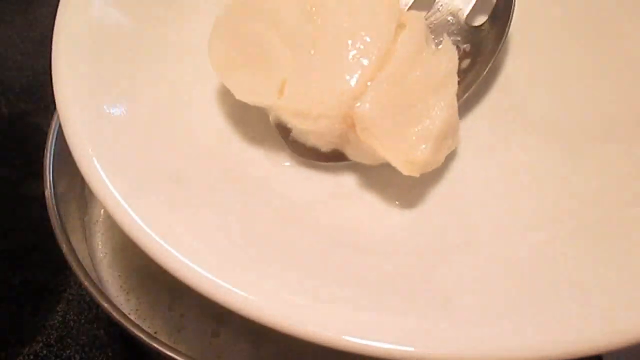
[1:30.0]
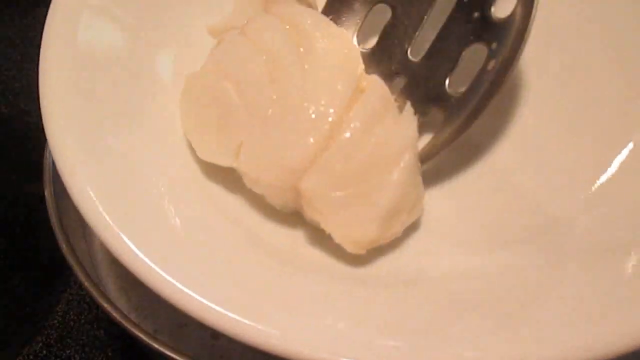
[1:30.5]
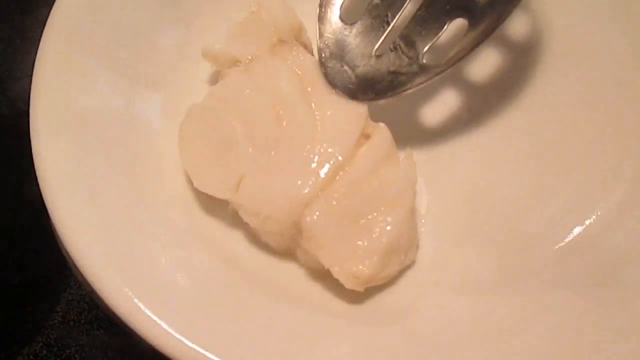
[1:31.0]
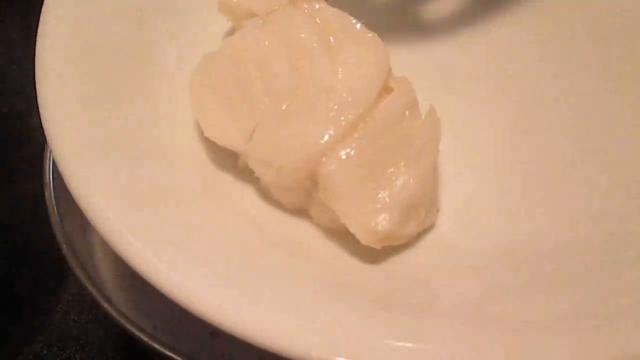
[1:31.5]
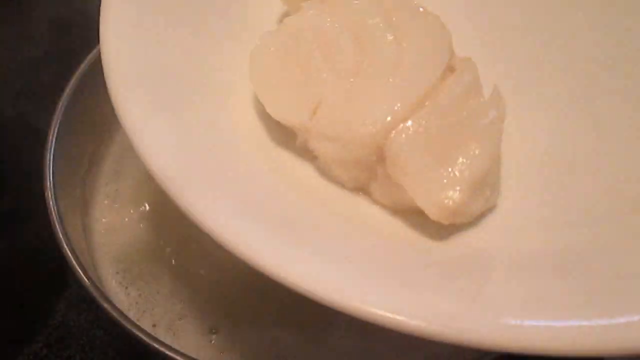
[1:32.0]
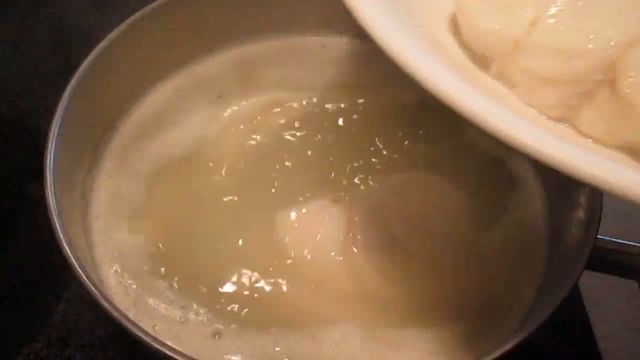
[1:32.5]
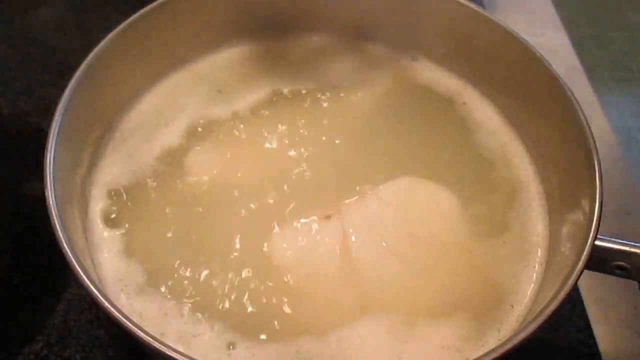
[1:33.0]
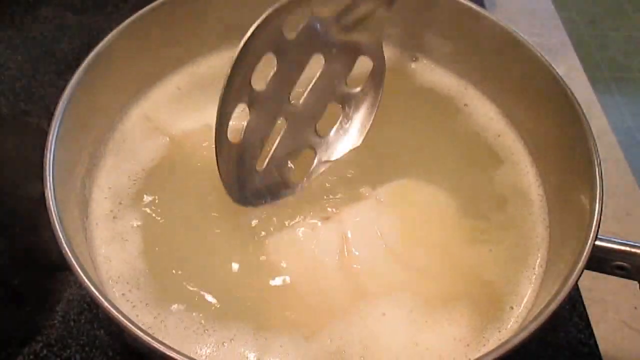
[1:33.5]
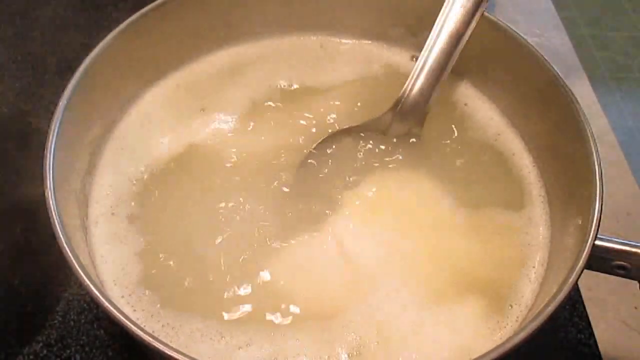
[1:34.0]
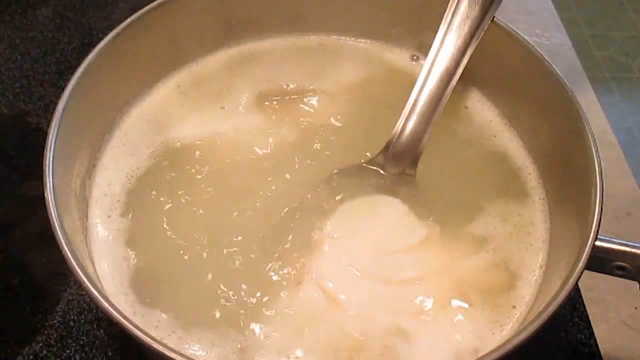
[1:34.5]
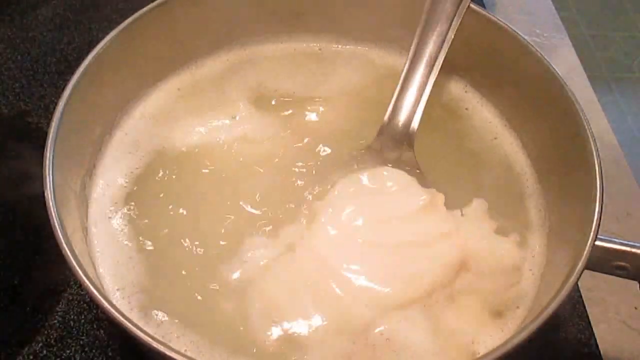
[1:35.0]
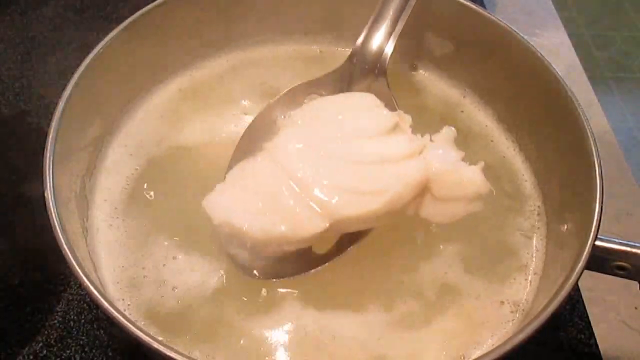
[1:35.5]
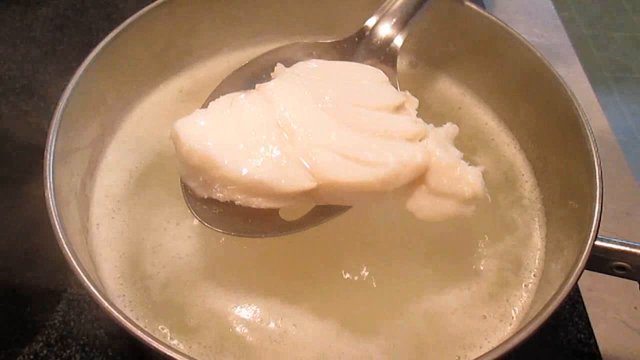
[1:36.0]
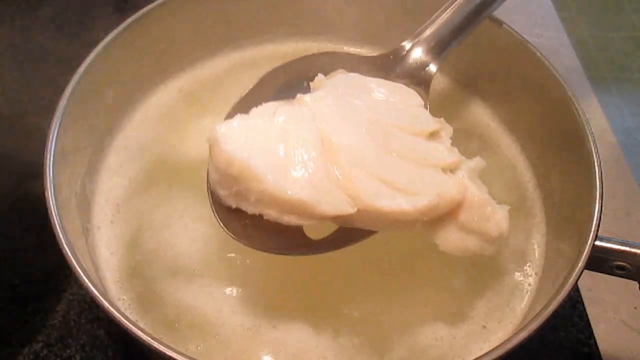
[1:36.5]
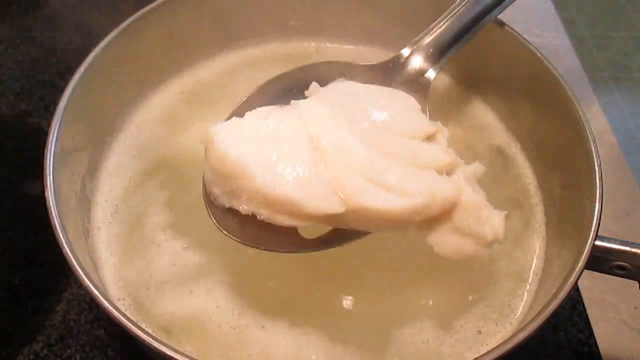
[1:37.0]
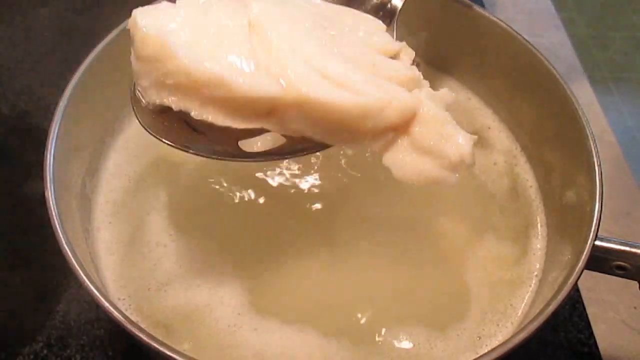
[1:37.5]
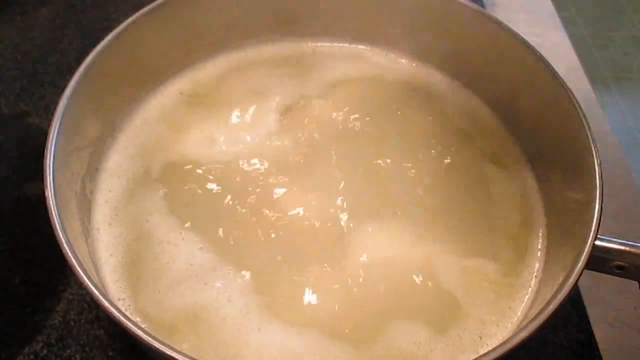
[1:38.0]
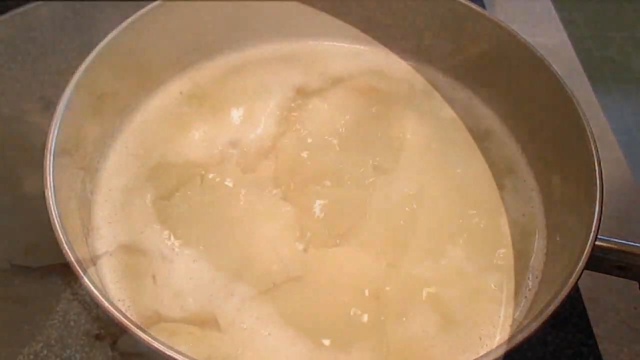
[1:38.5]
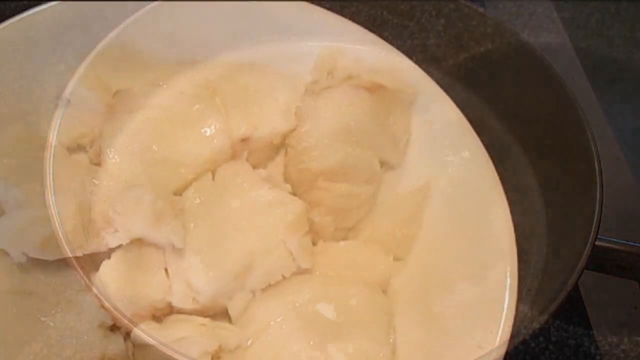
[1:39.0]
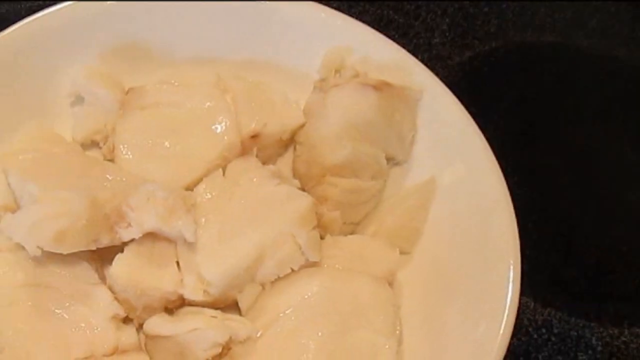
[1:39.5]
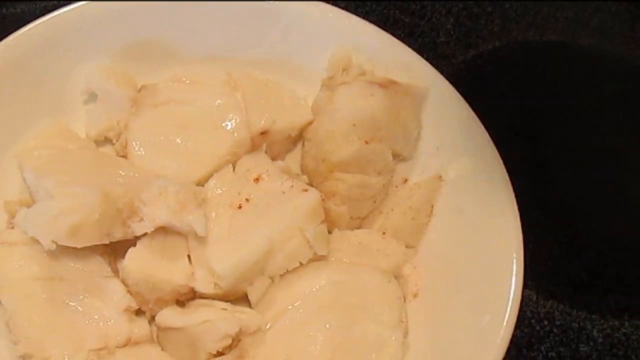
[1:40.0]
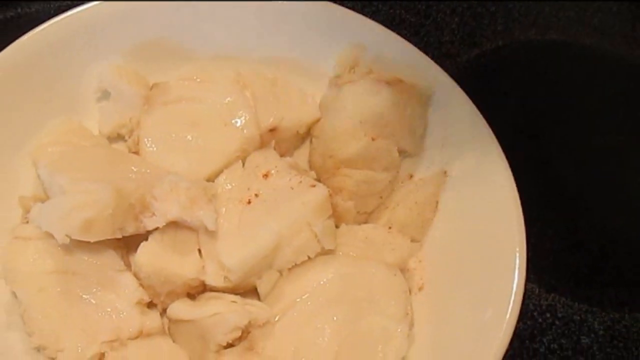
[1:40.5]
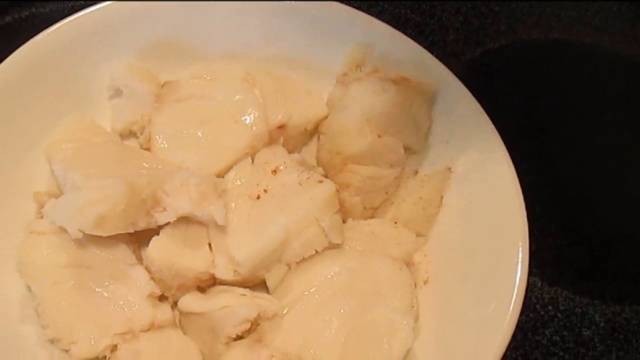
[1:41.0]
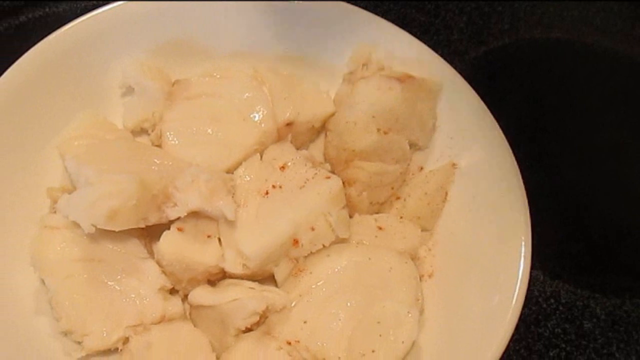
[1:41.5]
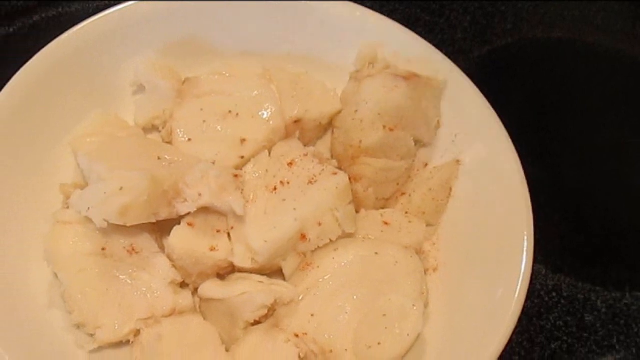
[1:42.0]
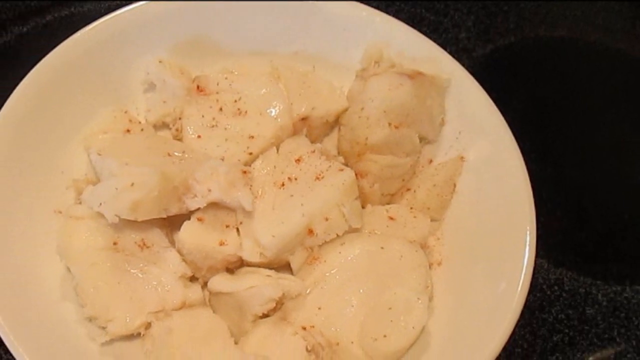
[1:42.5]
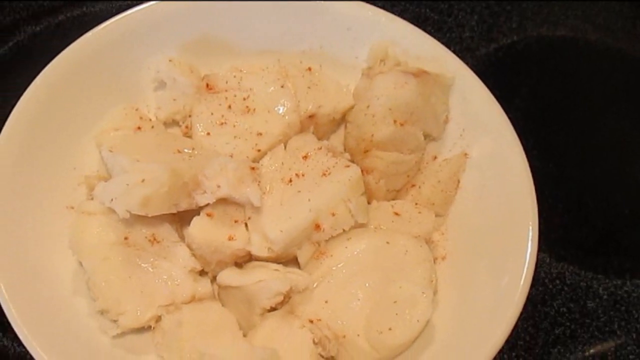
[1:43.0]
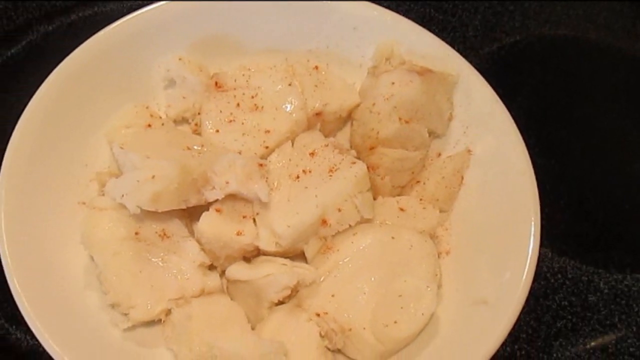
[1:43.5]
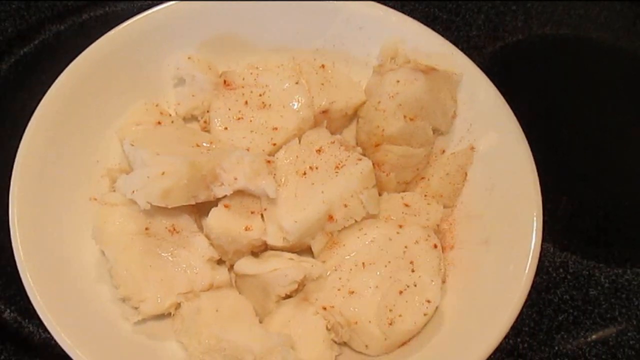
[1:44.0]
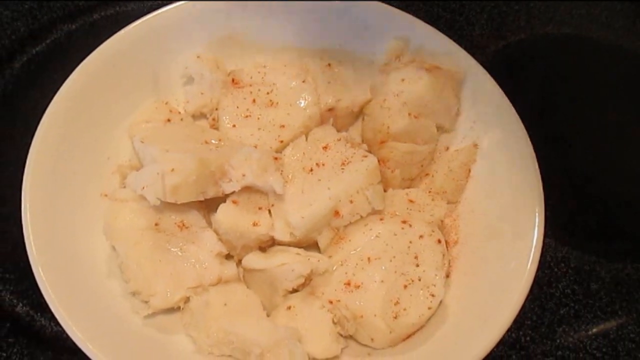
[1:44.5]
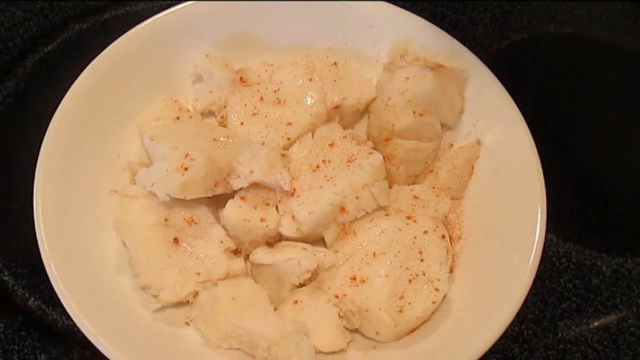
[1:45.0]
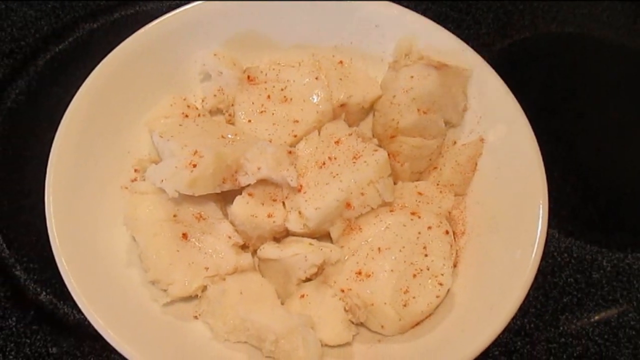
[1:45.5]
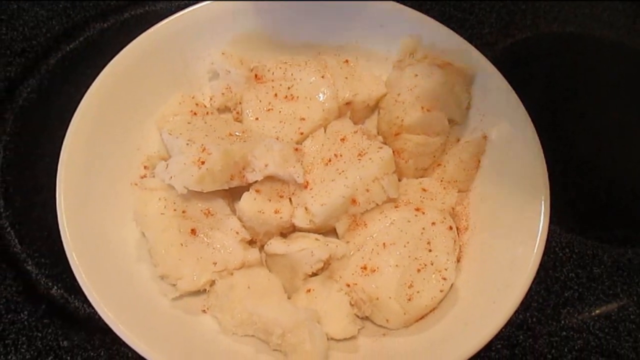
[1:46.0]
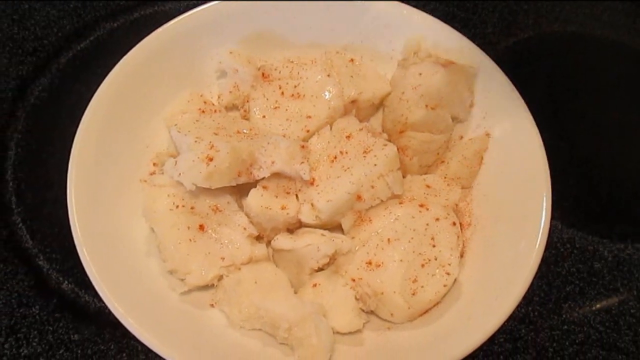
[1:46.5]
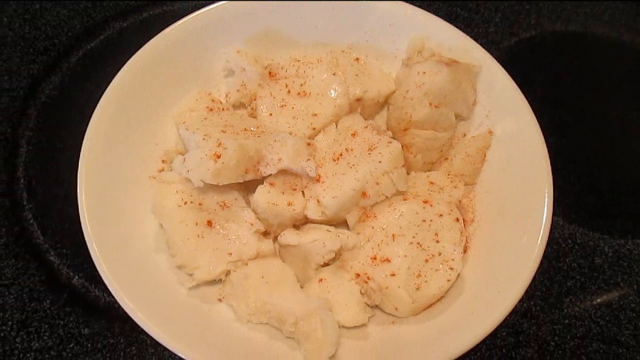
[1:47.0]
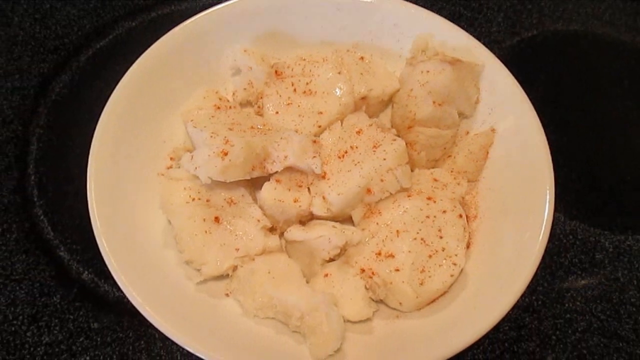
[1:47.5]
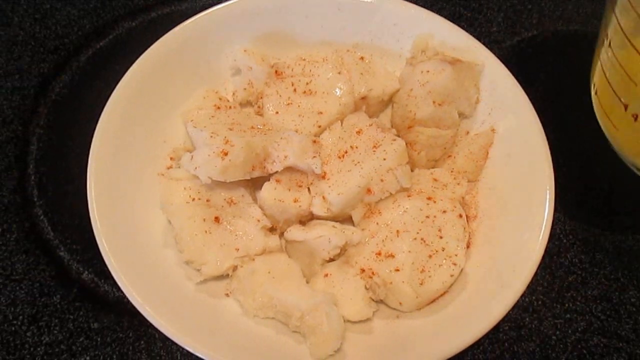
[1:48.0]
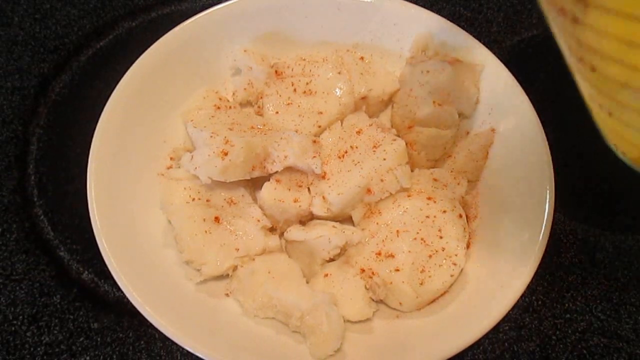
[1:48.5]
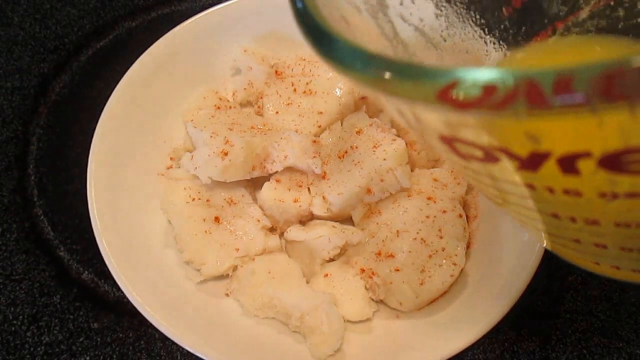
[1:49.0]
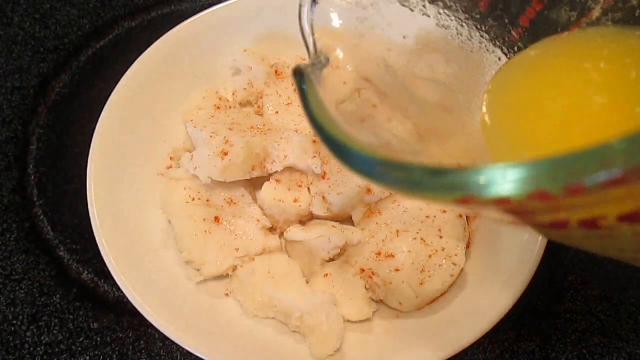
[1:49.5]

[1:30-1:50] A piece of fish is lifted out of the boiling water with a stainless steel spoon and the liquid drained from it. The white plate is brought into the image right over the pot, and the piece is placed on the plate. This is repeated: the spoon goes back in for another piece and is shaken several times to drain the liquid, and the second piece is placed on the plate. The next scene shows the white plate full of the cooked pieces of fish. A red spice that appears to be paprika or cayenne pepper is shaken onto the fish from a container that is not visible; only the spice coming down can be seen. A measuring cup of what looks like melted butter is brought into the scene before the scene ends.